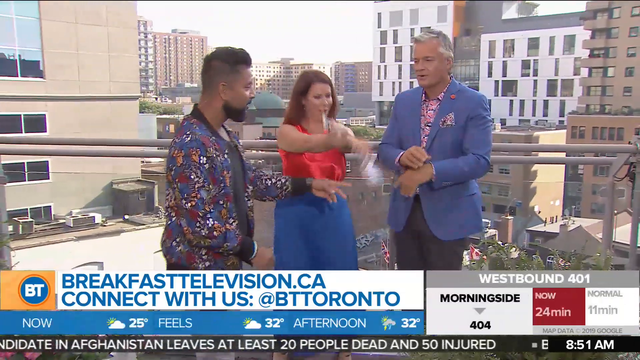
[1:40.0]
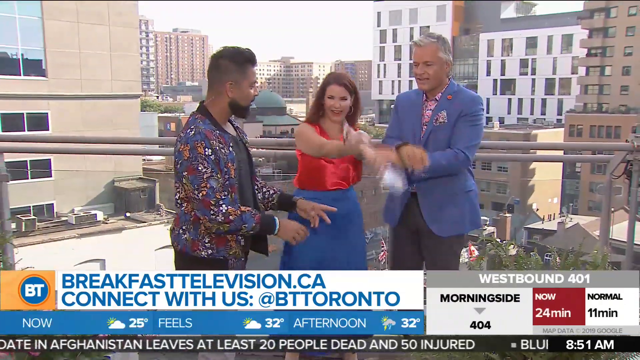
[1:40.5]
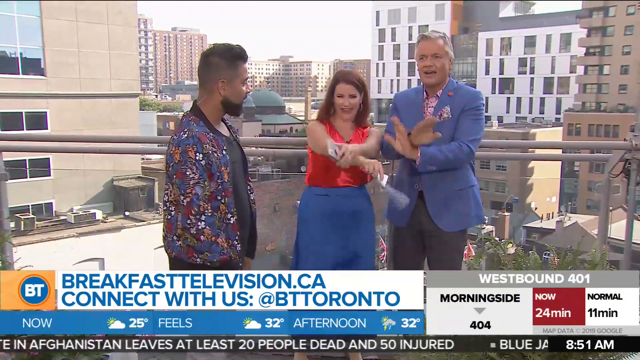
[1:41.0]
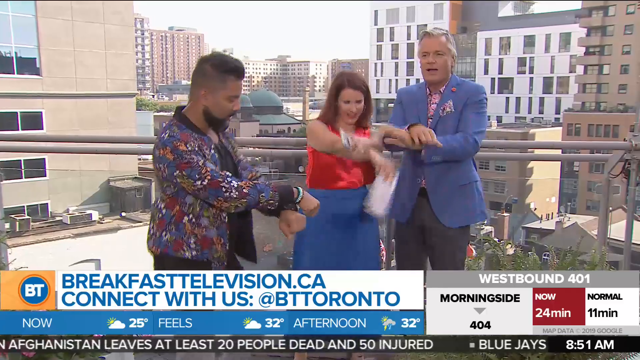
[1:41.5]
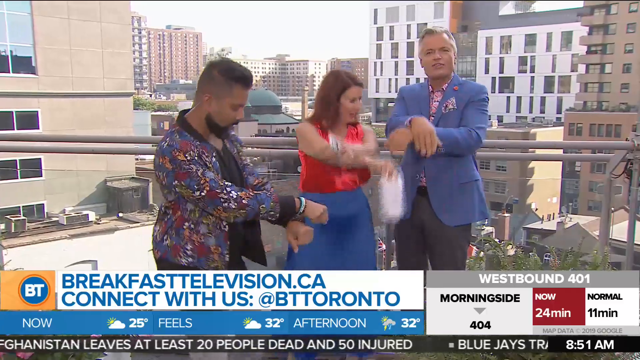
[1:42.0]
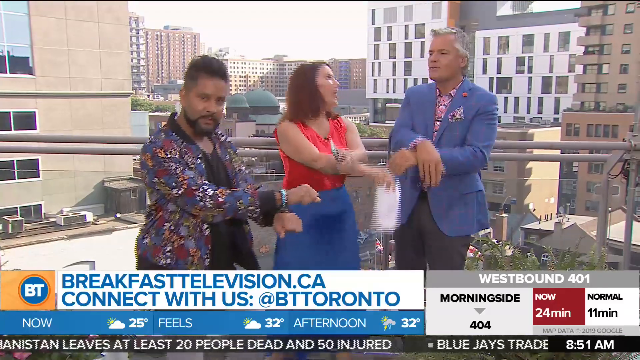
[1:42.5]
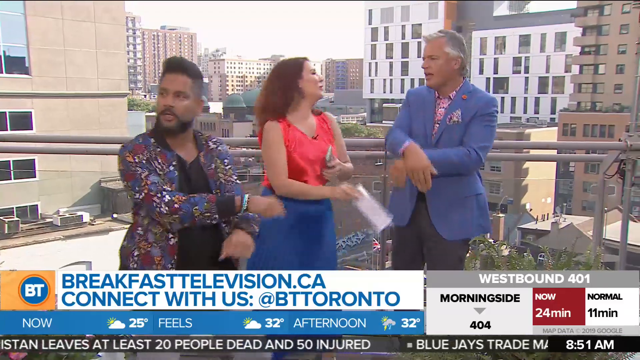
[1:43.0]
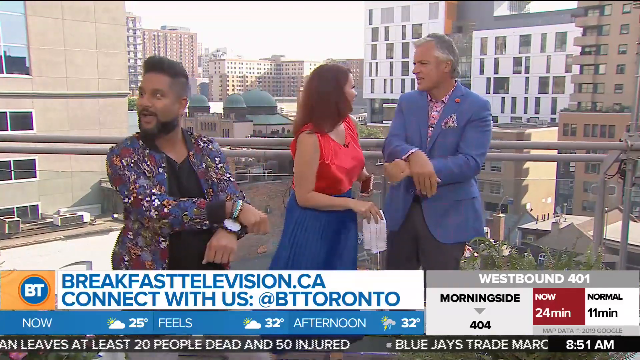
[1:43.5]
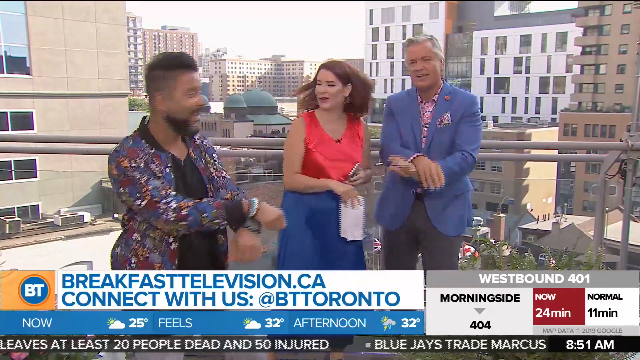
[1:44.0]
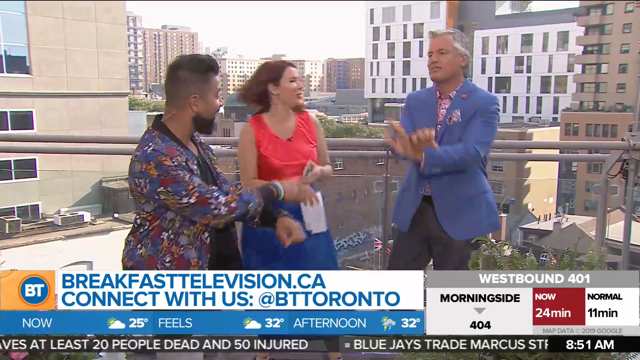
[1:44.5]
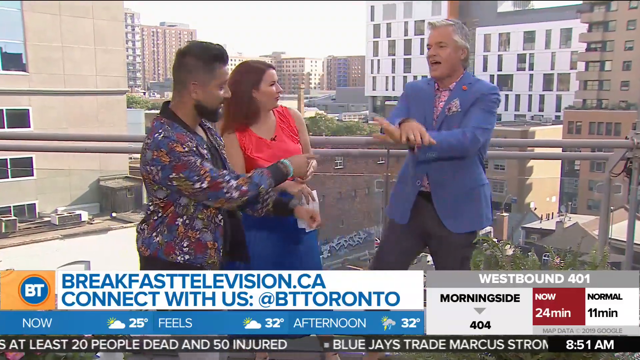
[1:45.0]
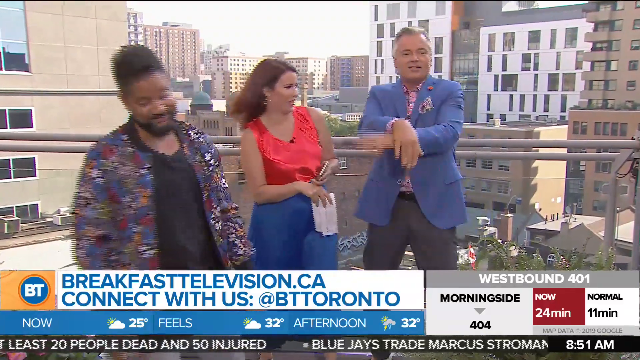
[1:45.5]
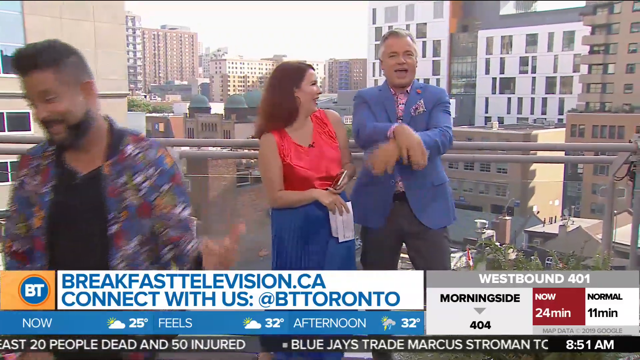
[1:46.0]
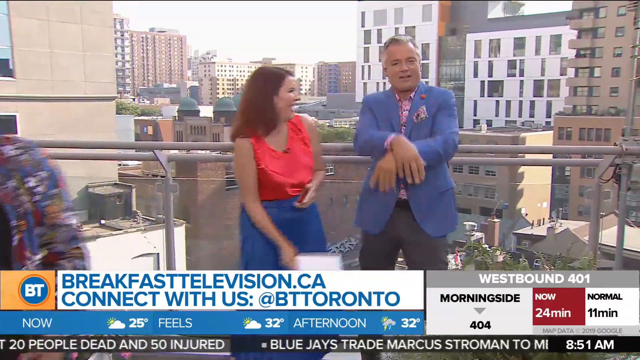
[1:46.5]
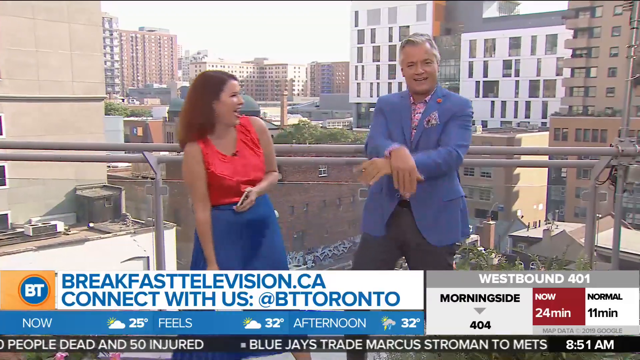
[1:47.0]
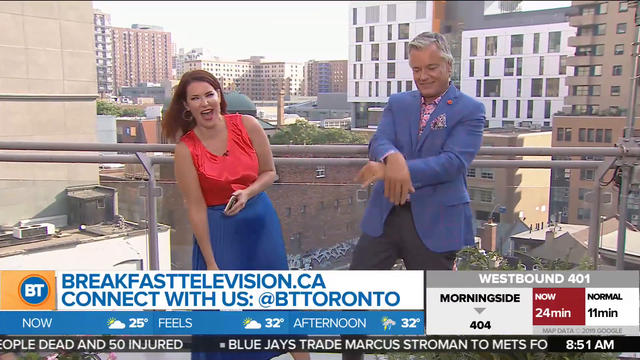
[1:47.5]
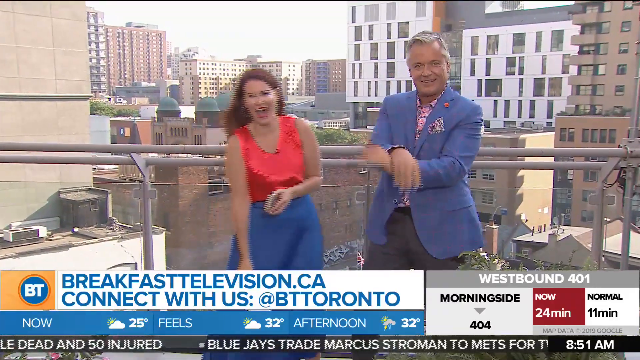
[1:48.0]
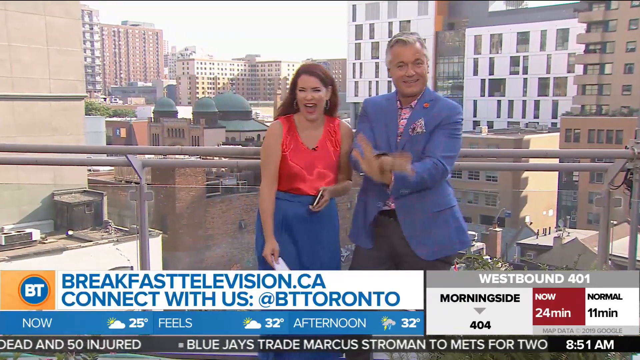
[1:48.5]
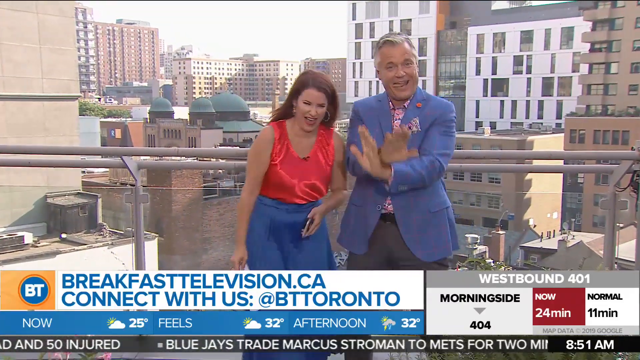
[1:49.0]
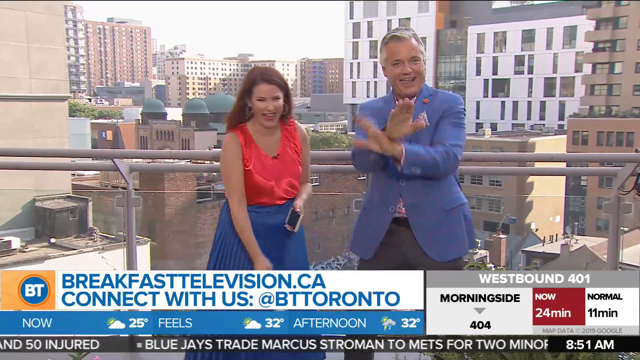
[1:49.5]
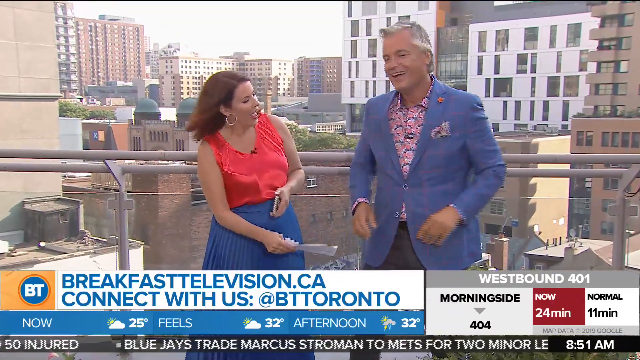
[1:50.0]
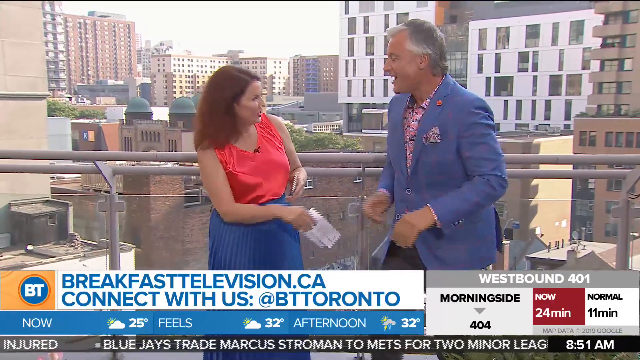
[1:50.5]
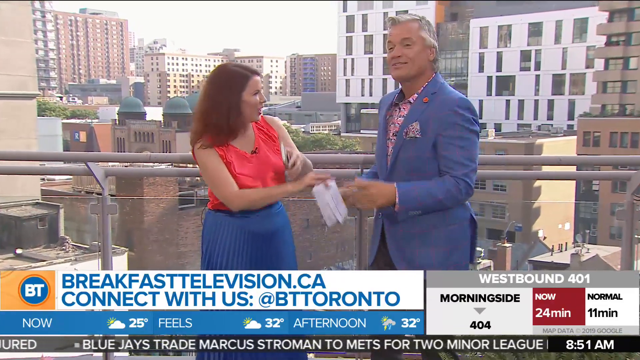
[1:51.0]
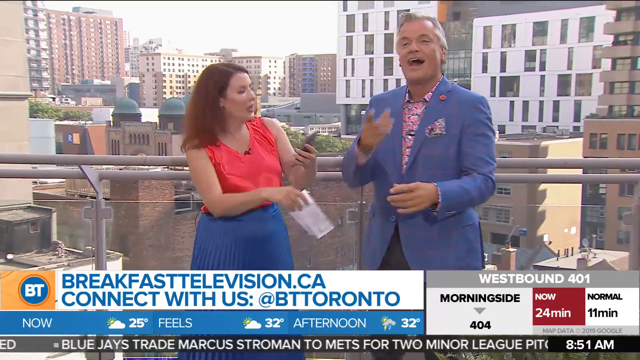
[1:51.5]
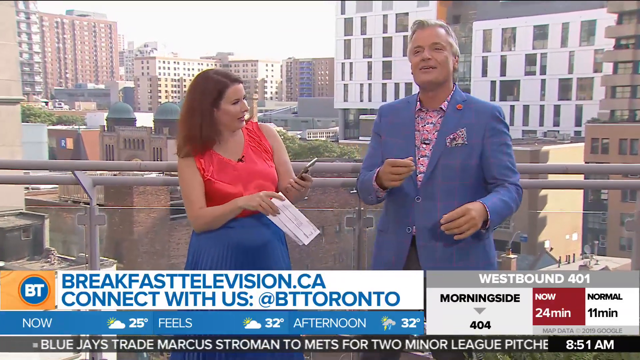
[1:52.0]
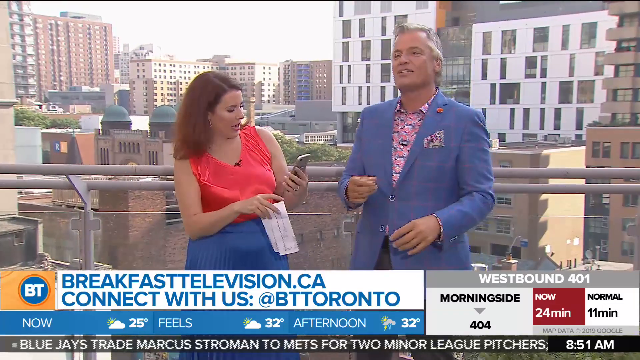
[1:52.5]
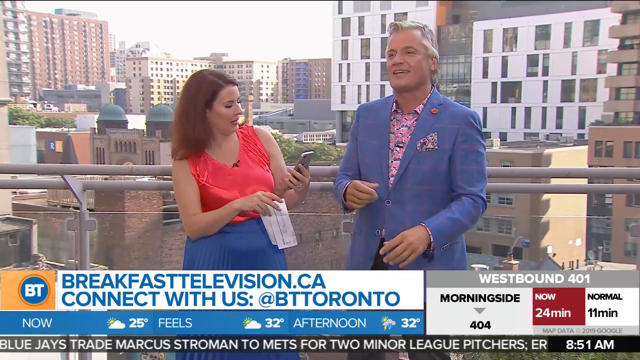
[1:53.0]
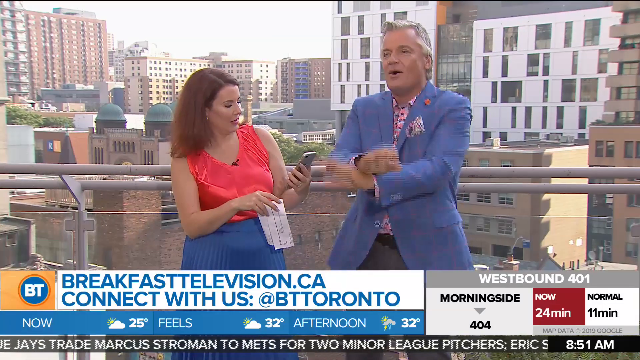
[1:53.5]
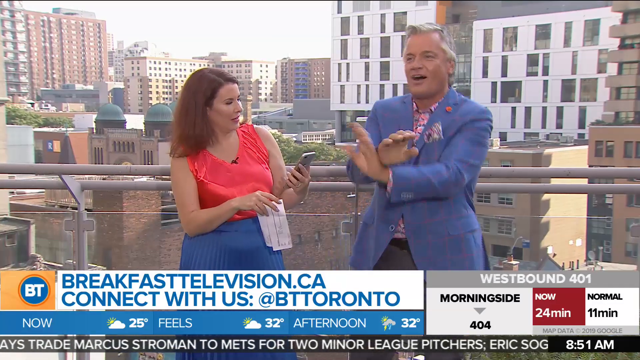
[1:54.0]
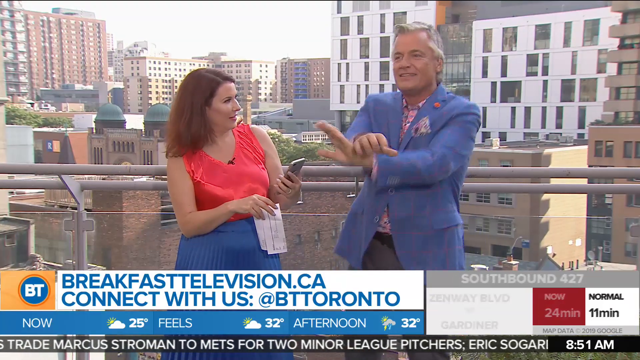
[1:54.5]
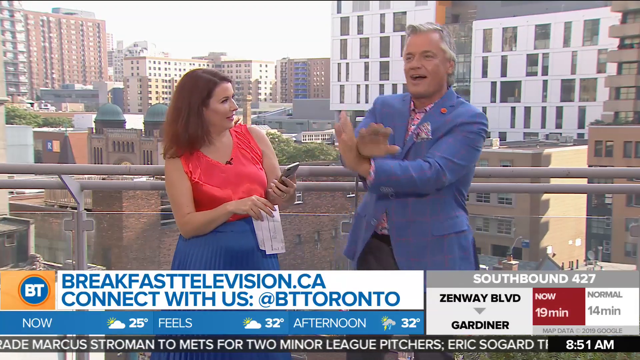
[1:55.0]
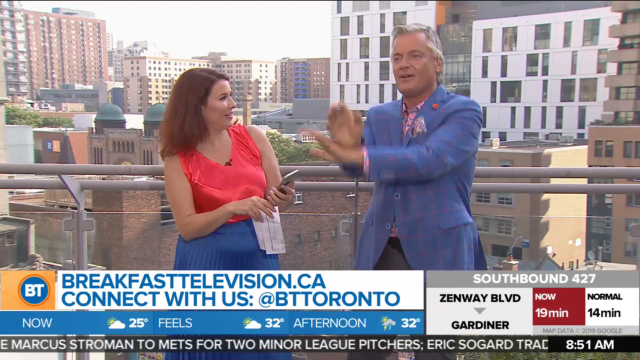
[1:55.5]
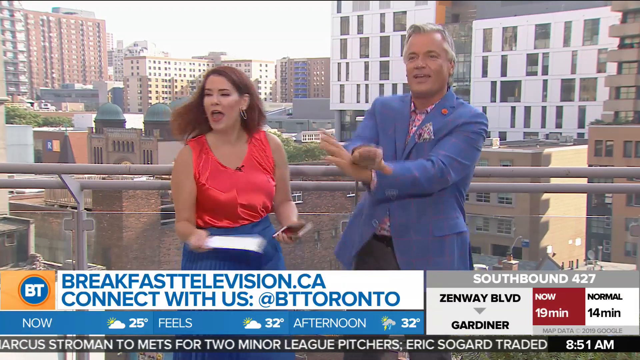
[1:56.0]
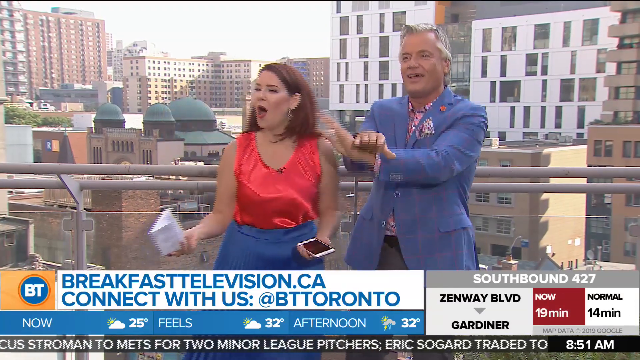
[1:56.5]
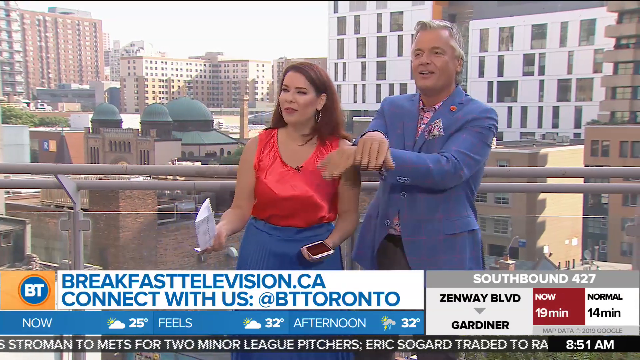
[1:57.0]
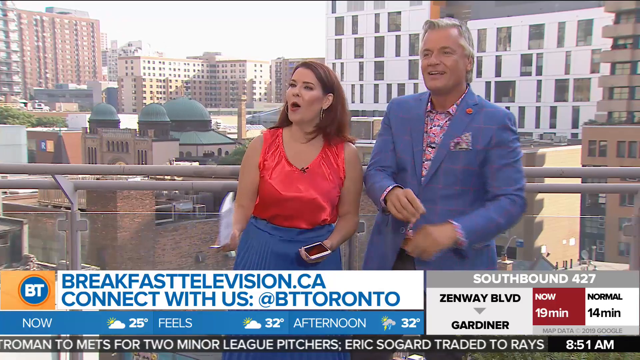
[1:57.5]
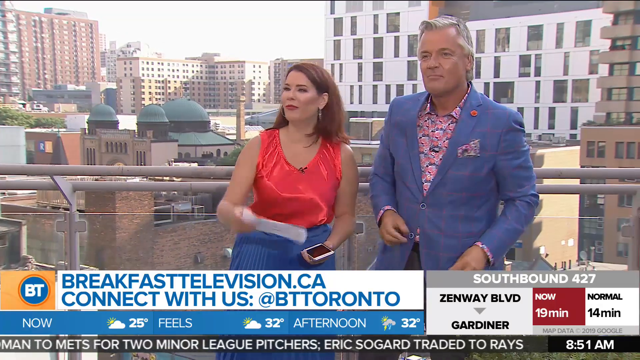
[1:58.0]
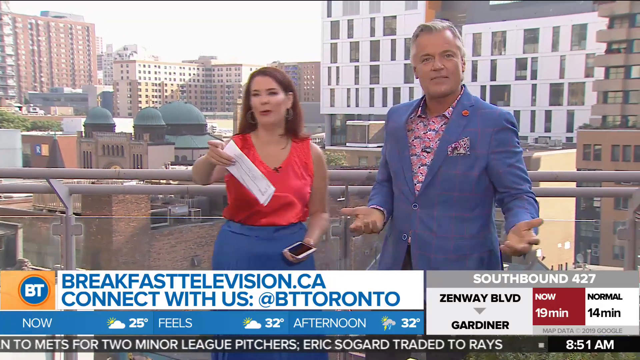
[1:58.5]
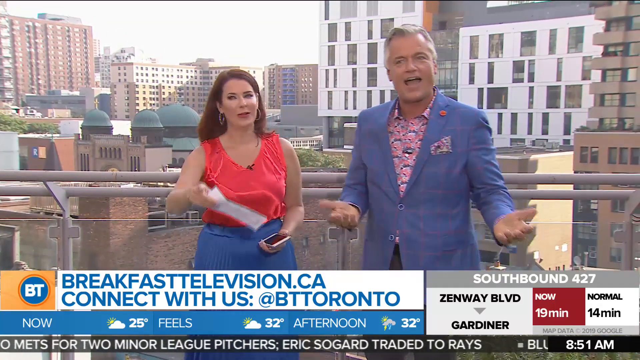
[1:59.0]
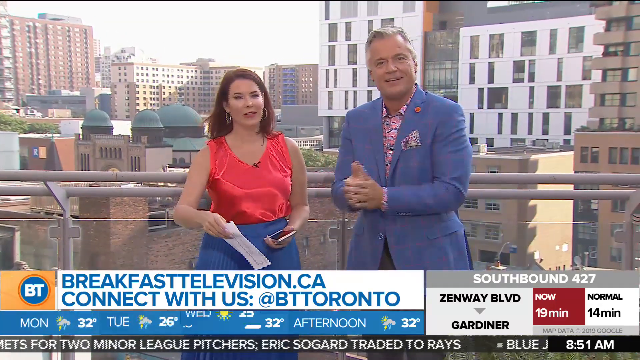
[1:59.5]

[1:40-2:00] The third man joins in the dancing, and all three dance together. He then laughingly shakes his head and walks off camera, while the male host keeps dancing and the female host laughs. The hosts talk, including to someone off camera who is not visible, and continue their little dance.